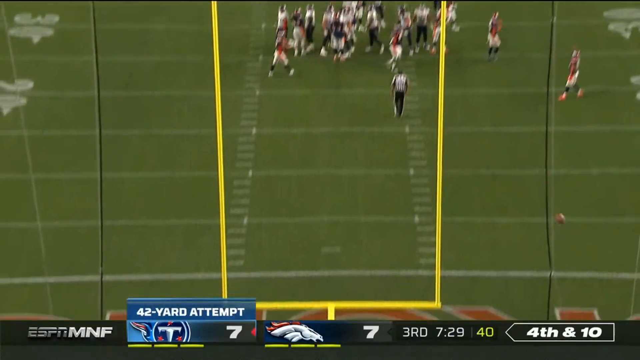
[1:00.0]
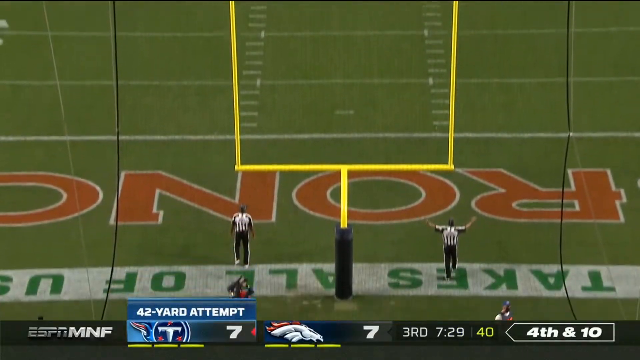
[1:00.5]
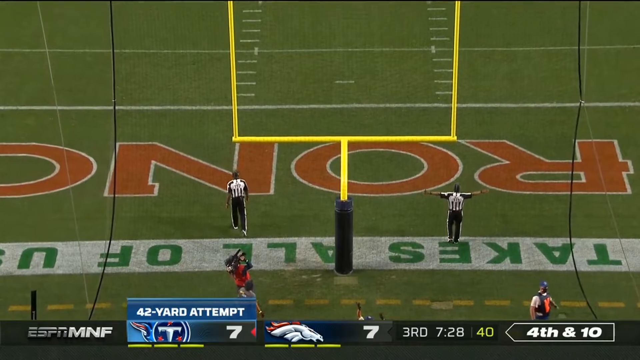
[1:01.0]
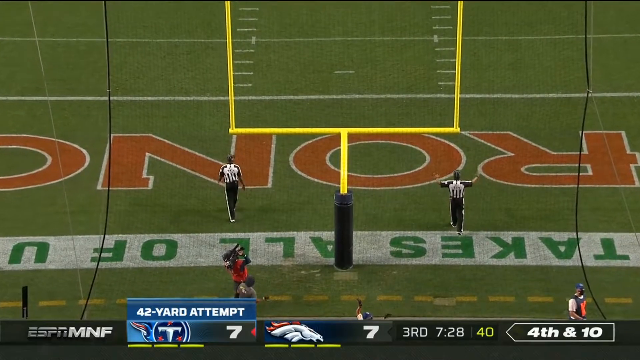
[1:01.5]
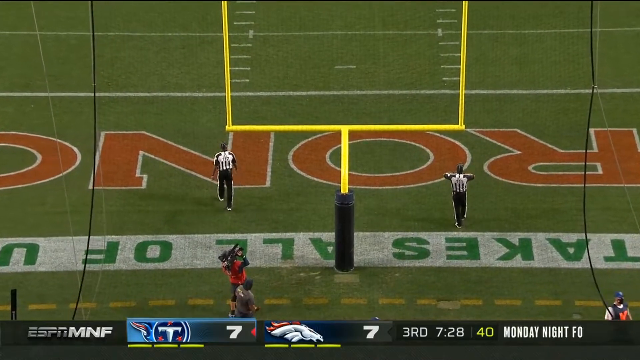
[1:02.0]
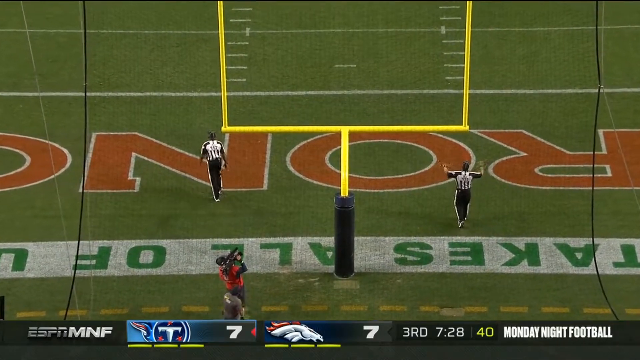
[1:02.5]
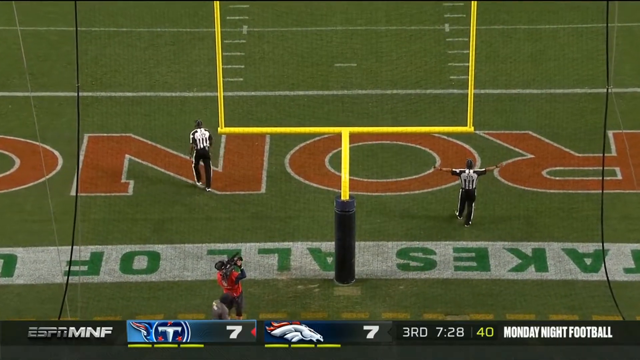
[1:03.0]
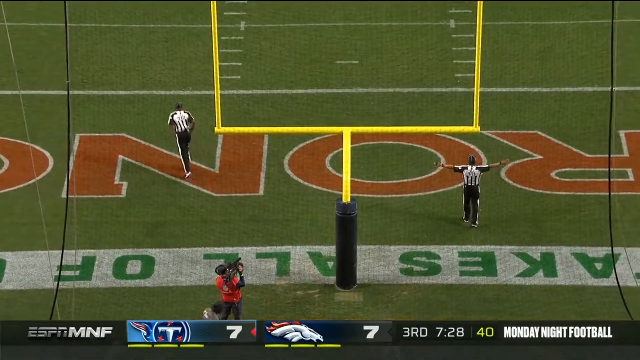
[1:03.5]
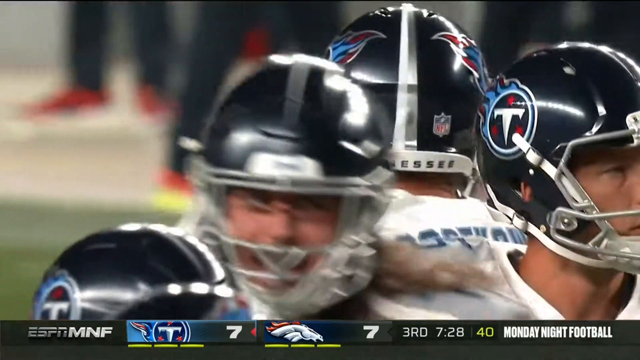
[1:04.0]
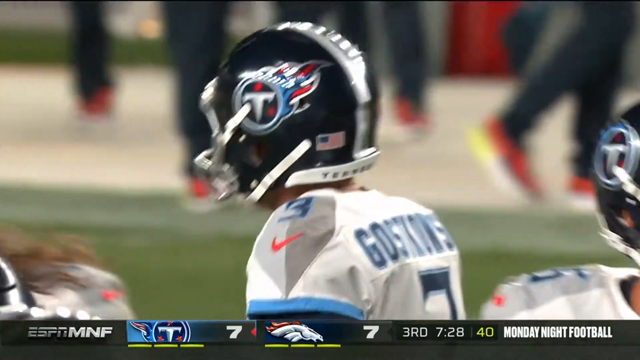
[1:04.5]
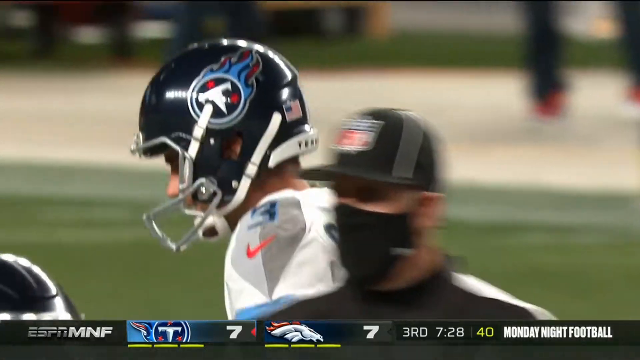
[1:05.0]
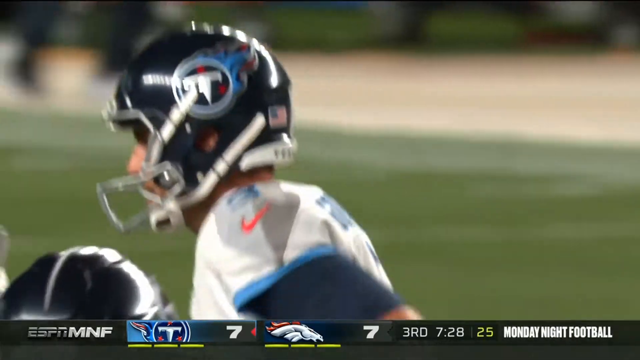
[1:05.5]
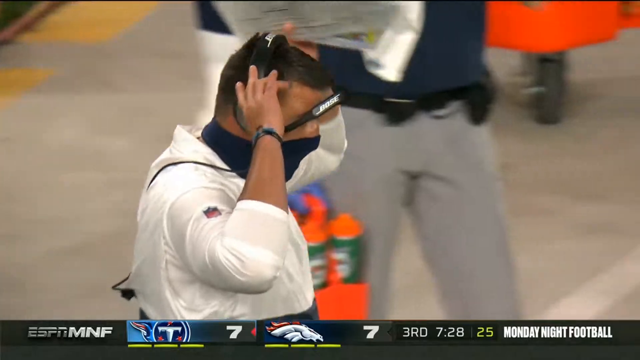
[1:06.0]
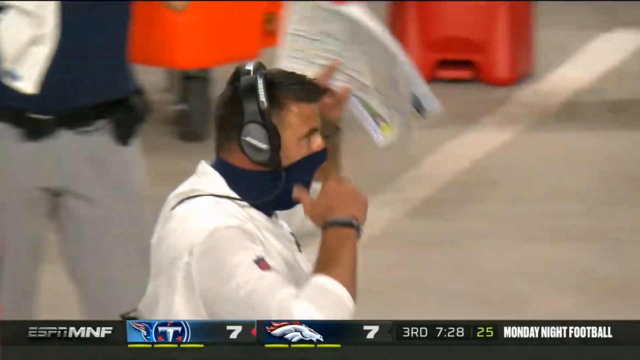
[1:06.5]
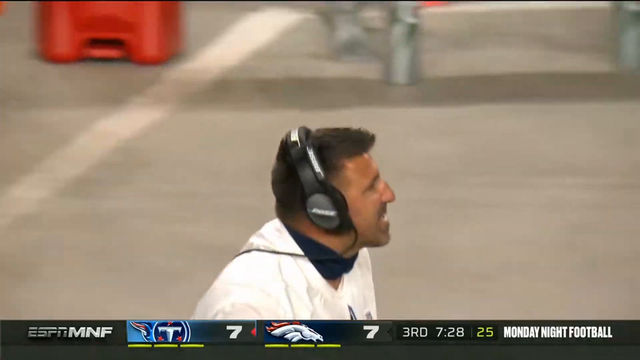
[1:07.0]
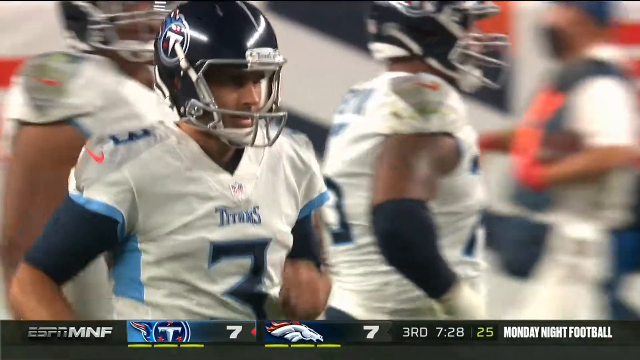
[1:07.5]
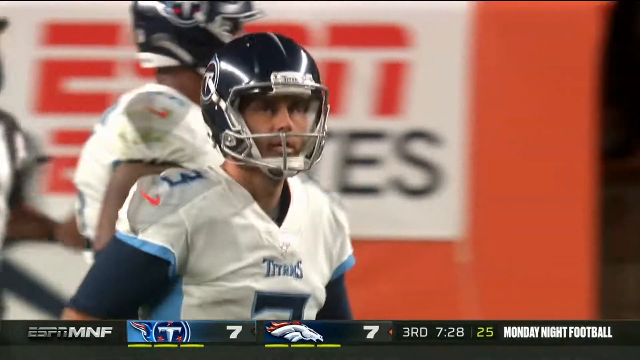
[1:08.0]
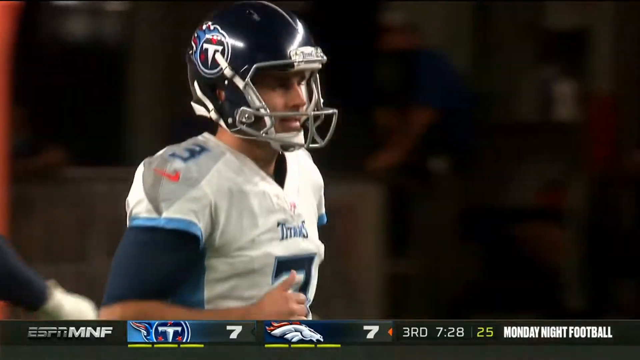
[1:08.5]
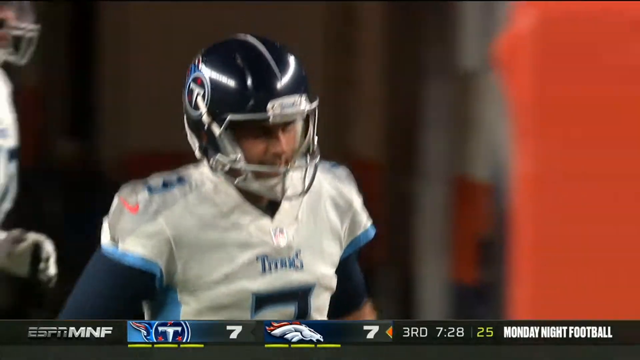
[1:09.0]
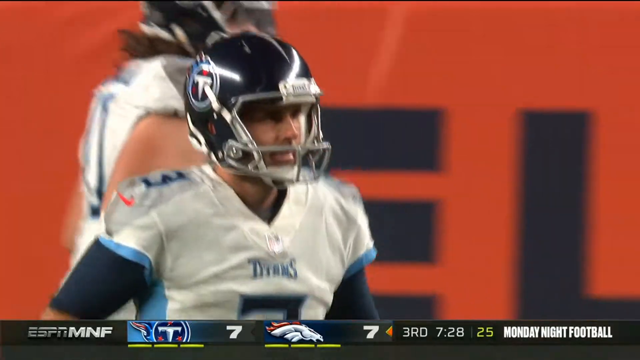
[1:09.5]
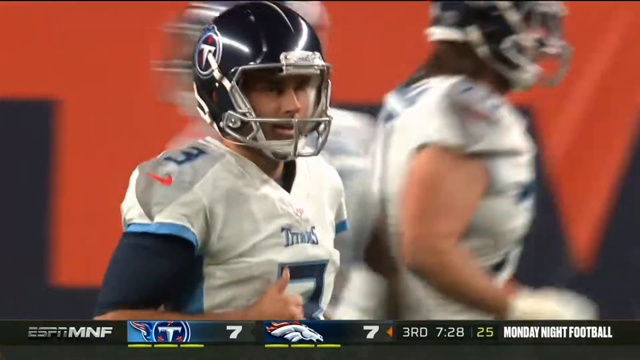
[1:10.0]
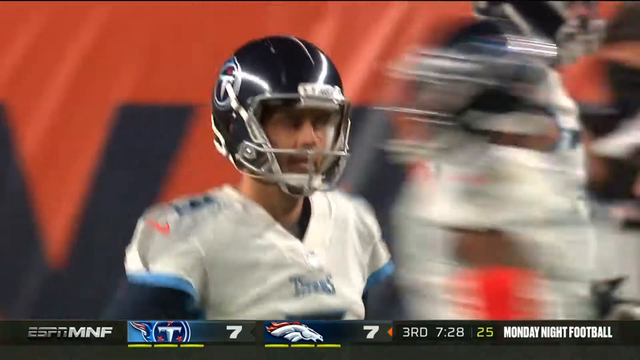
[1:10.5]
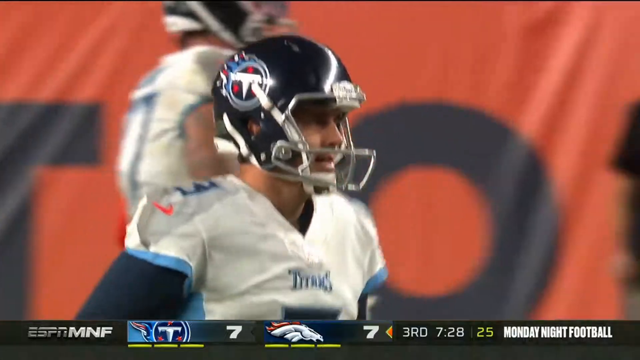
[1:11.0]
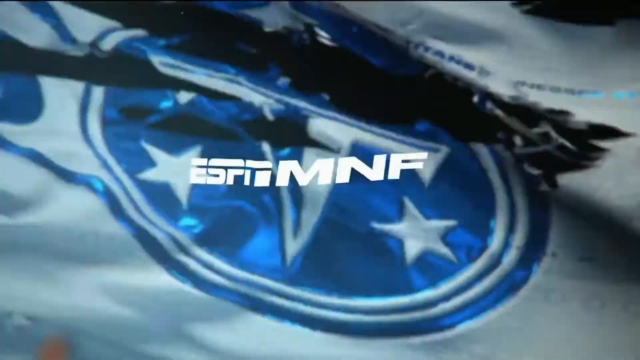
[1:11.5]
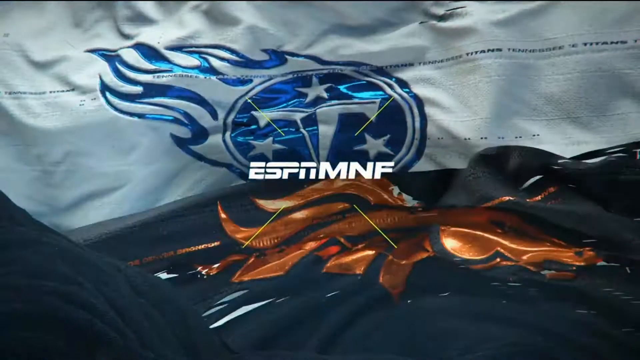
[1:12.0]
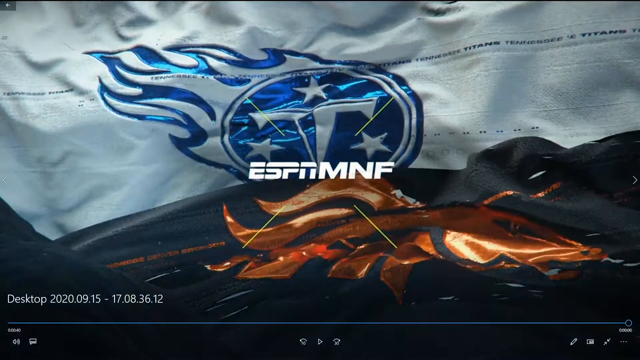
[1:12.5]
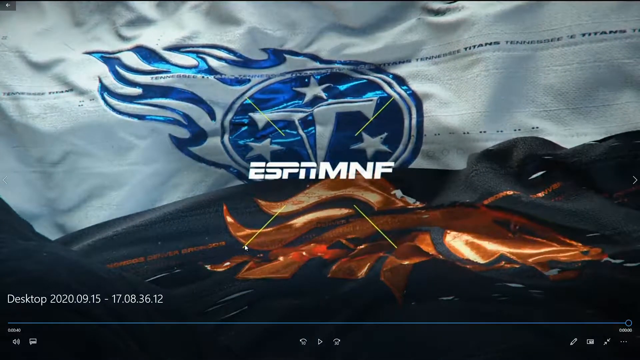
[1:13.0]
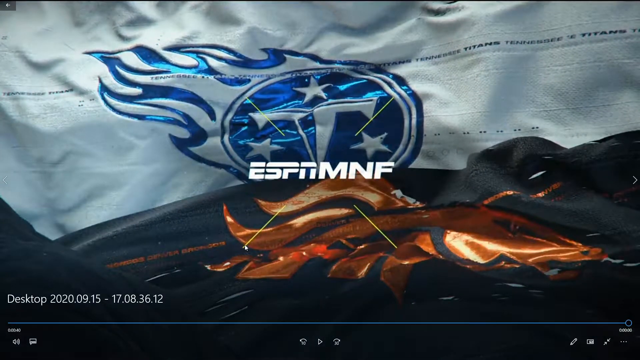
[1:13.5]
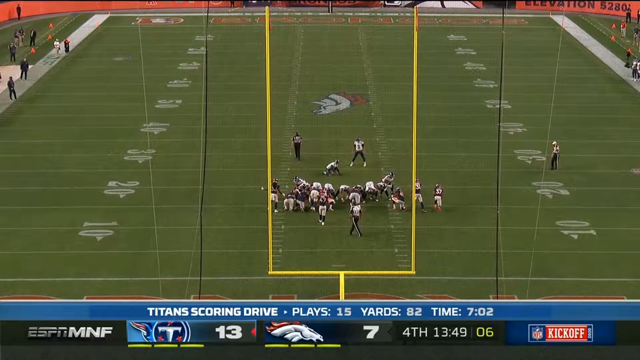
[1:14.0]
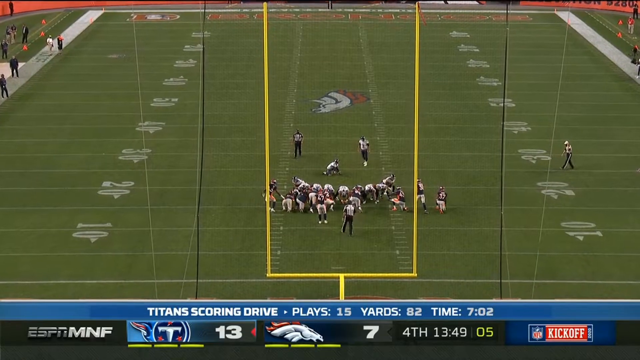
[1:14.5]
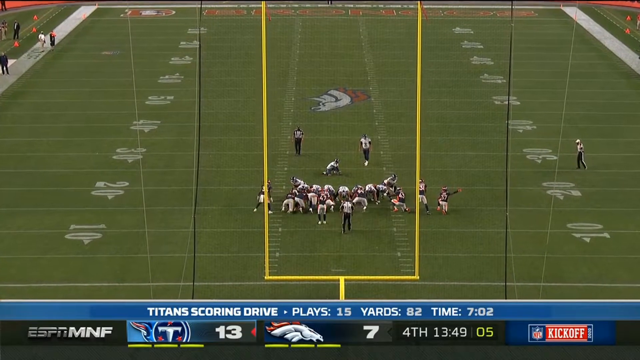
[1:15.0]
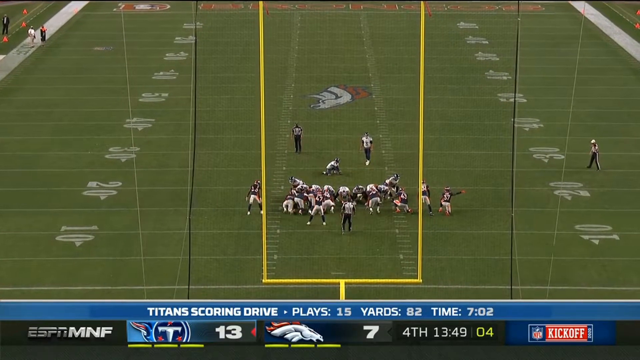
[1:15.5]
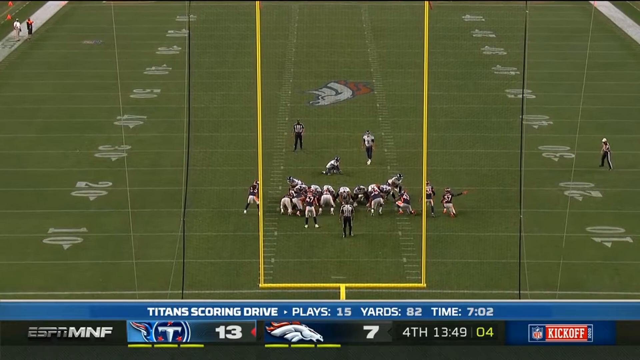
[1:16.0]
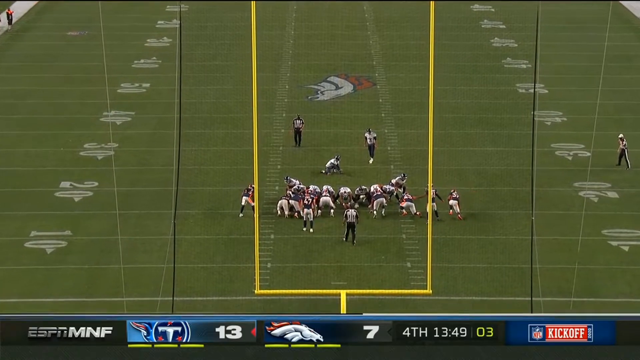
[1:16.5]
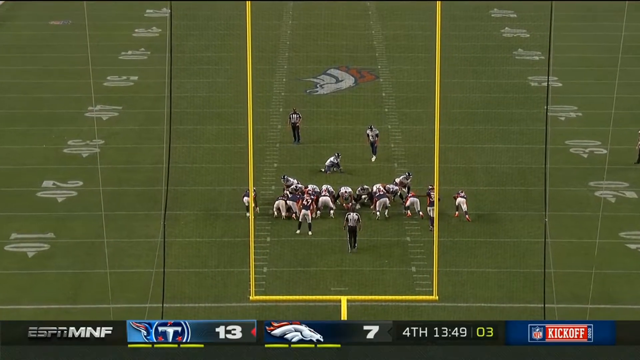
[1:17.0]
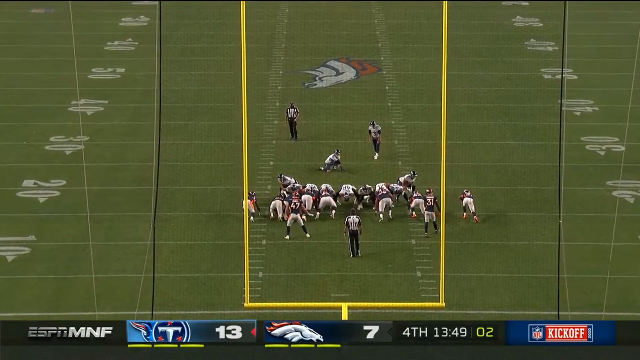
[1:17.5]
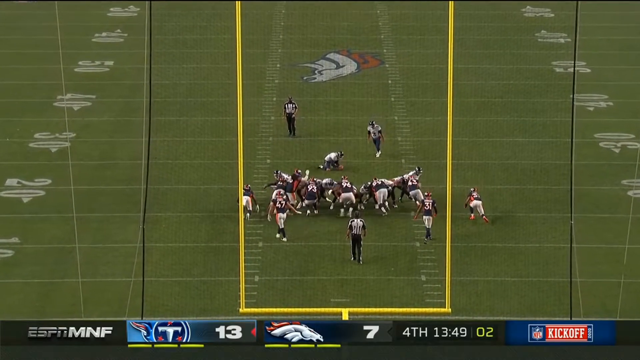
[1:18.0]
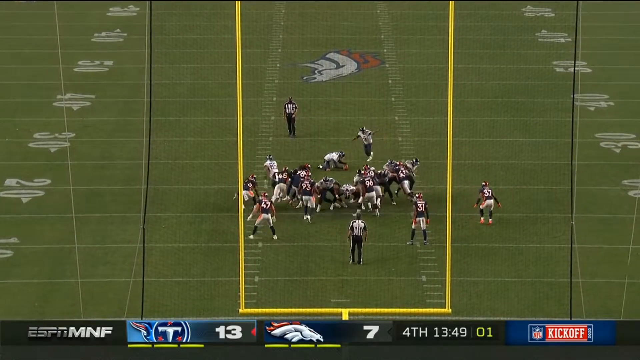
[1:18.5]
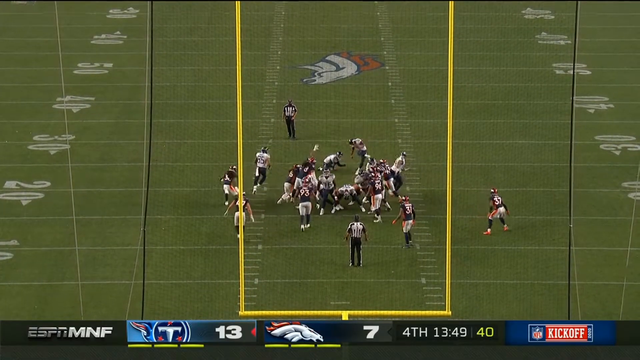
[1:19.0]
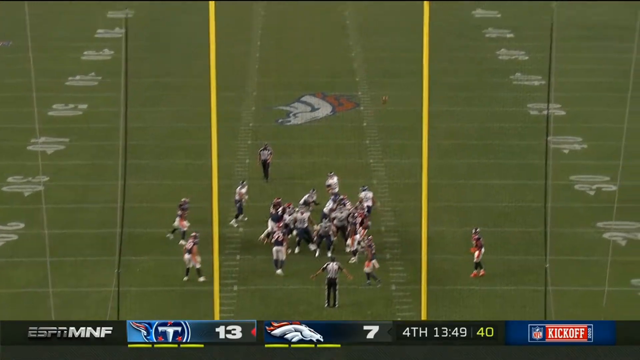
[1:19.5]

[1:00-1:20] A replay of the Tennessee Titans attempt is shown. The game then moves to the third quarter, with the logos, the teams and ESPN still visible. The Titans attempt a 42-yard field goal with the score still 7 to 7, 7 minutes and 32 seconds left in the third quarter, and 40 seconds on the game clock; it is fourth and 10. The Denver Broncos push out their defense, trying to block the kick. The kicker misses far right, then places his hand over his head, discouraged and down. The Broncos celebrate after stopping the attempt. Mike Grable, head coach of the Tennessee Titans, wearing a mask, looks very displeased and angry.